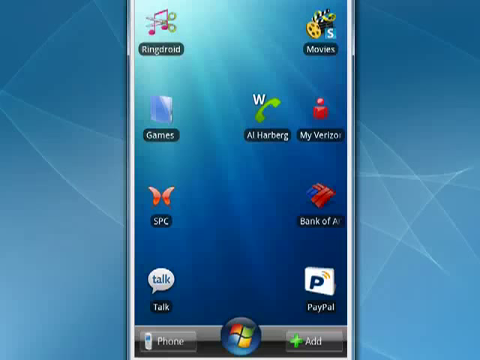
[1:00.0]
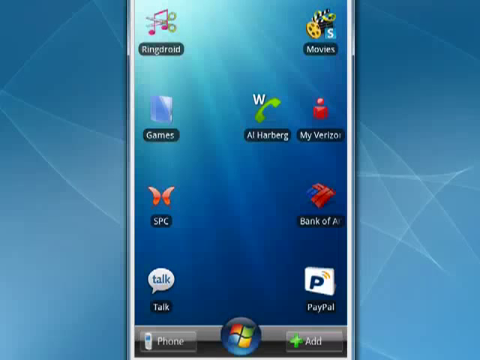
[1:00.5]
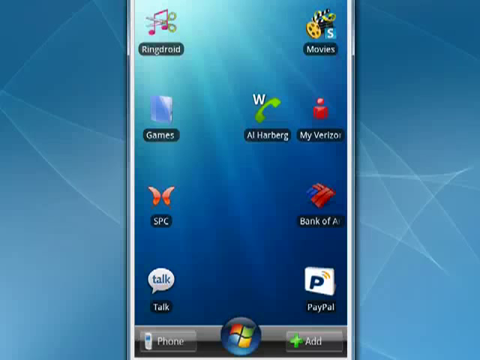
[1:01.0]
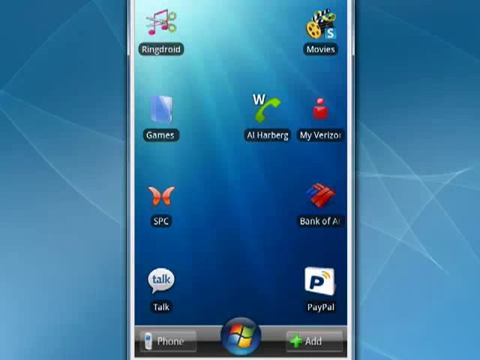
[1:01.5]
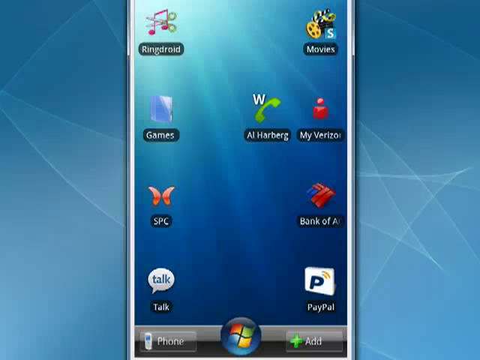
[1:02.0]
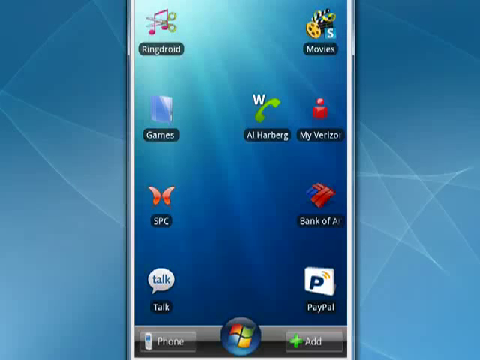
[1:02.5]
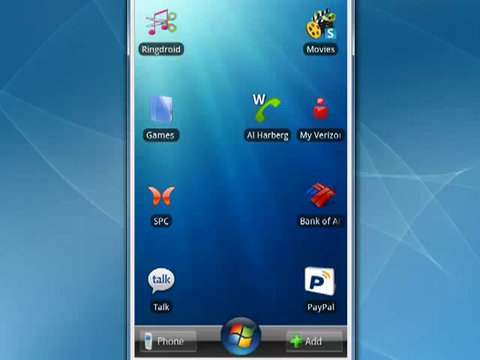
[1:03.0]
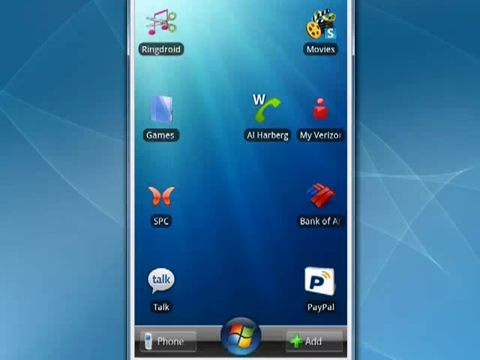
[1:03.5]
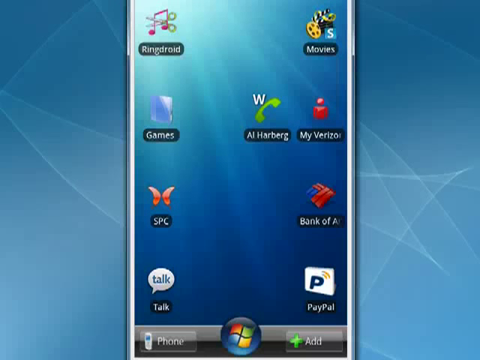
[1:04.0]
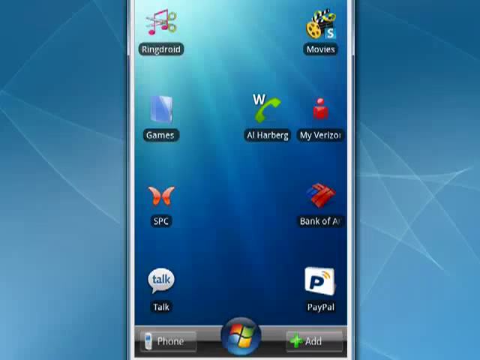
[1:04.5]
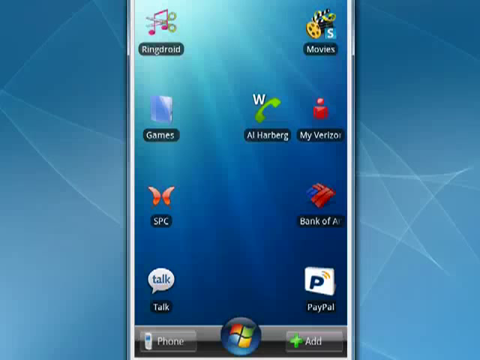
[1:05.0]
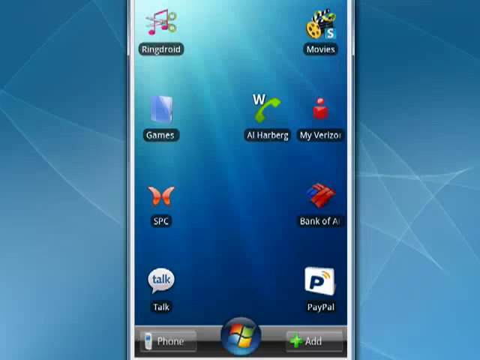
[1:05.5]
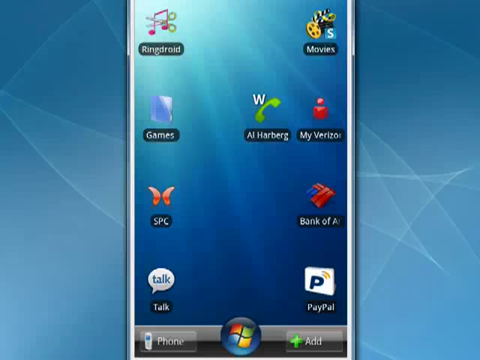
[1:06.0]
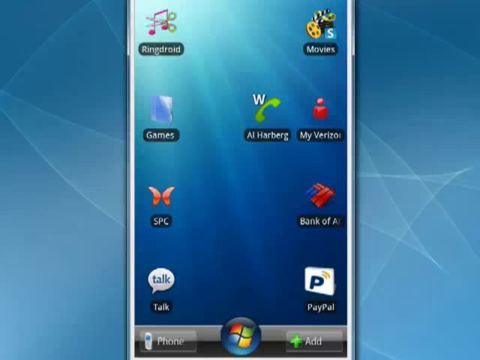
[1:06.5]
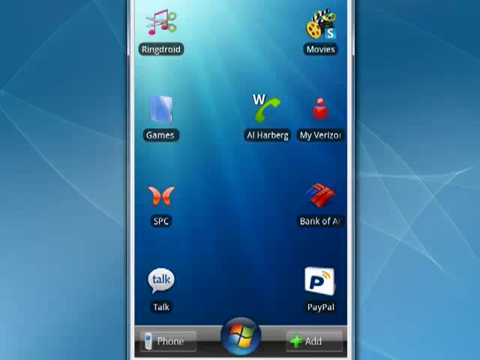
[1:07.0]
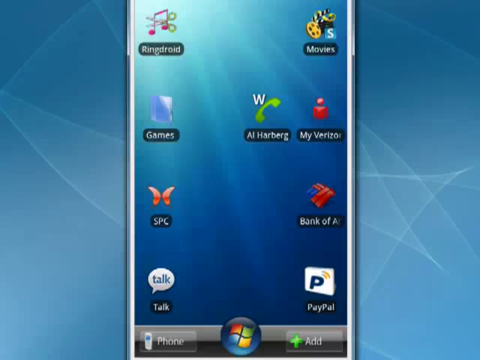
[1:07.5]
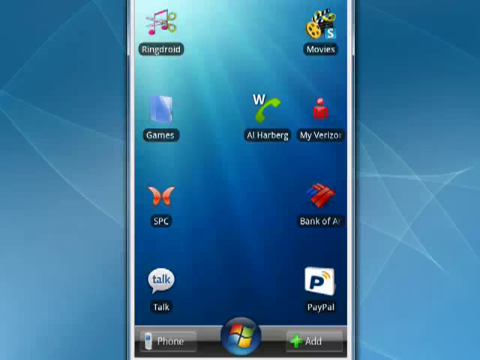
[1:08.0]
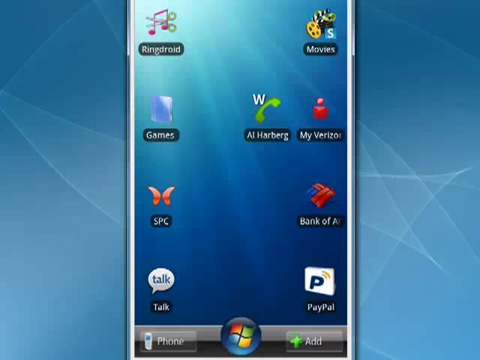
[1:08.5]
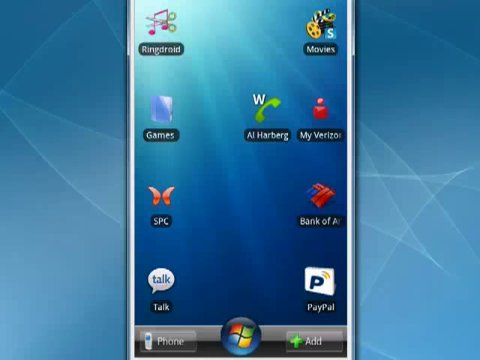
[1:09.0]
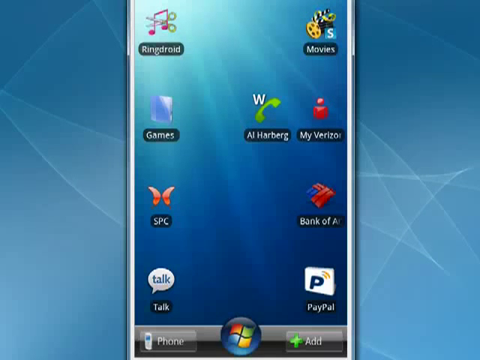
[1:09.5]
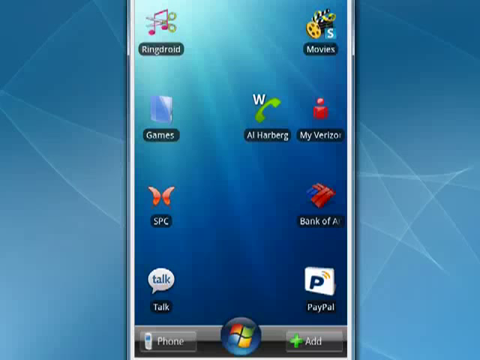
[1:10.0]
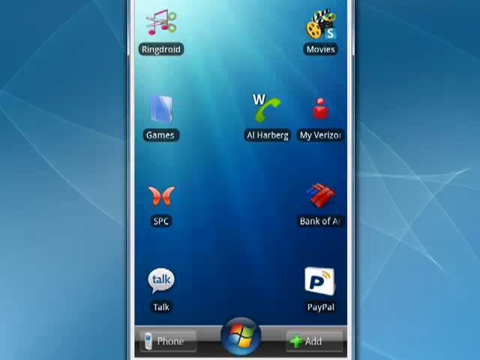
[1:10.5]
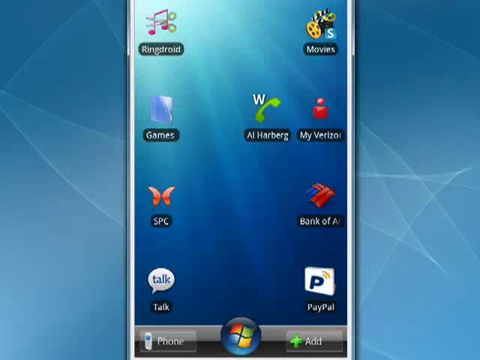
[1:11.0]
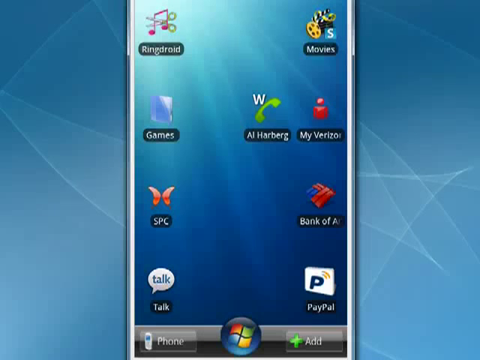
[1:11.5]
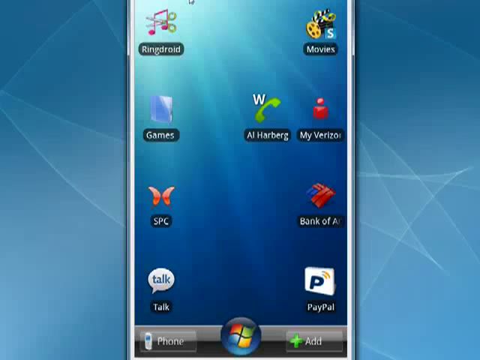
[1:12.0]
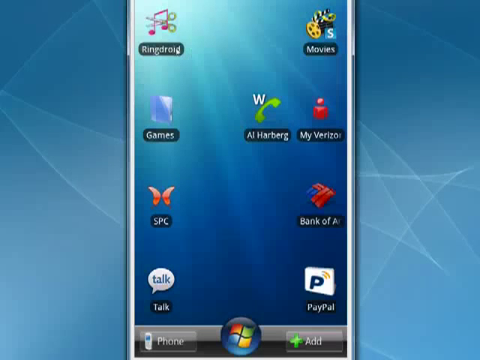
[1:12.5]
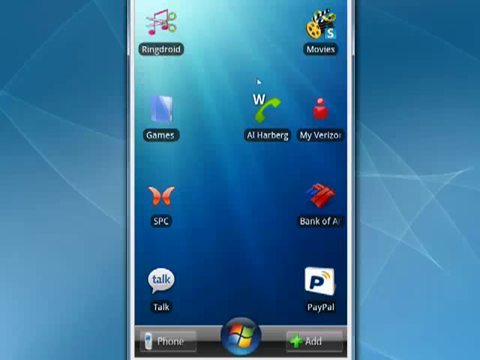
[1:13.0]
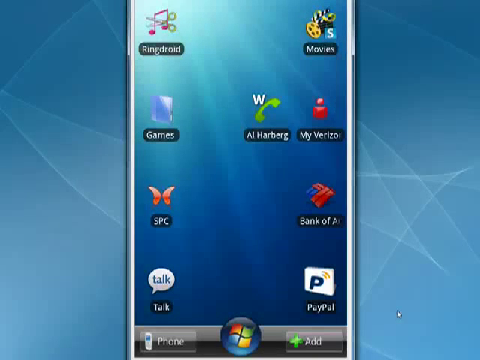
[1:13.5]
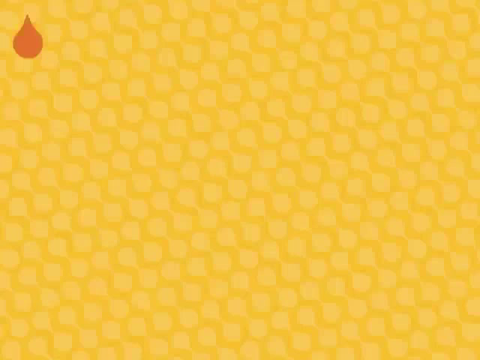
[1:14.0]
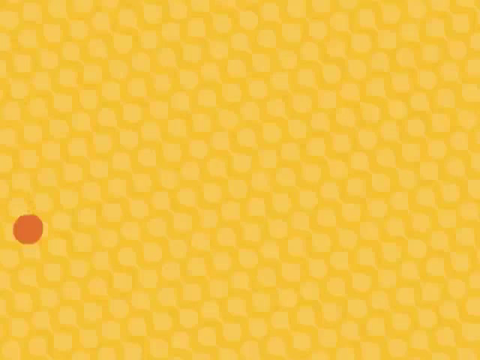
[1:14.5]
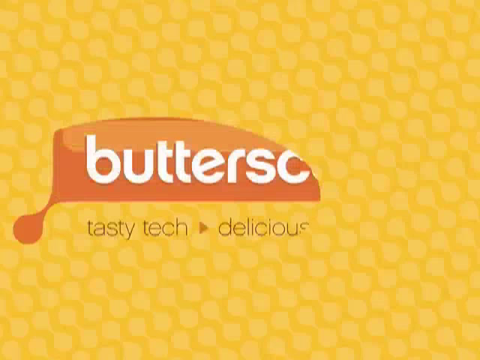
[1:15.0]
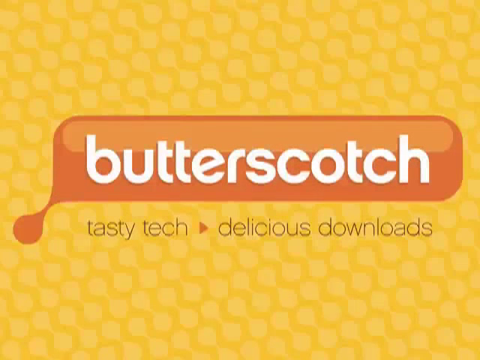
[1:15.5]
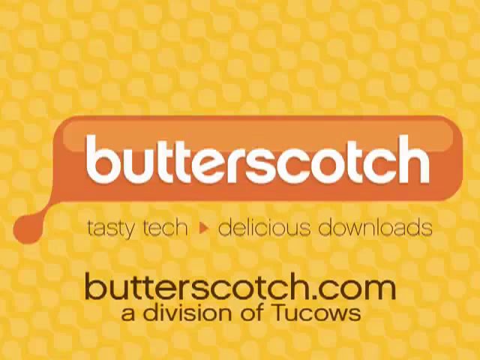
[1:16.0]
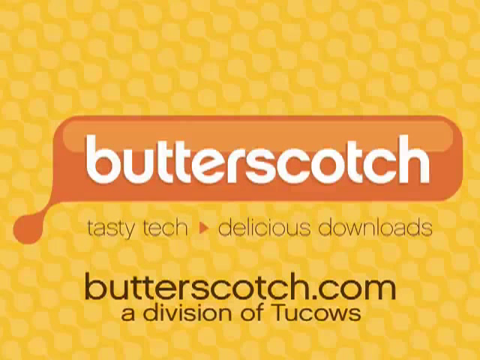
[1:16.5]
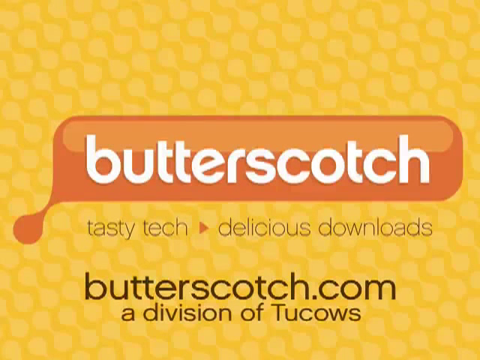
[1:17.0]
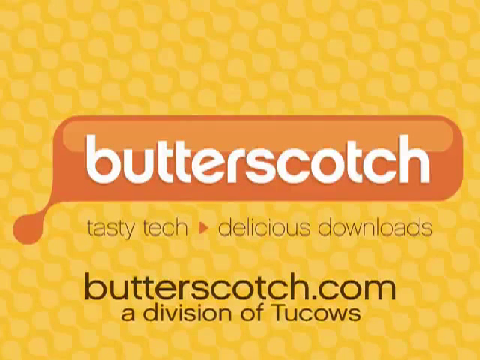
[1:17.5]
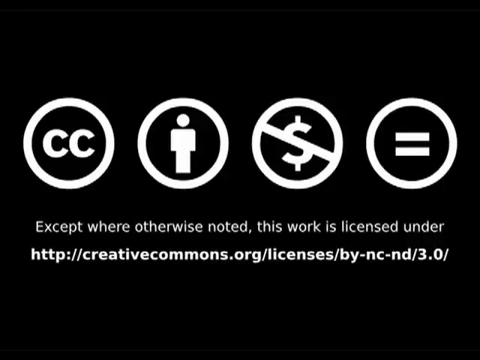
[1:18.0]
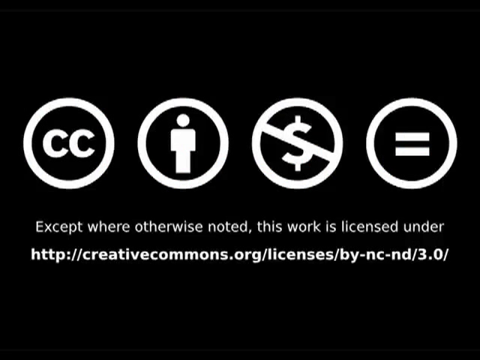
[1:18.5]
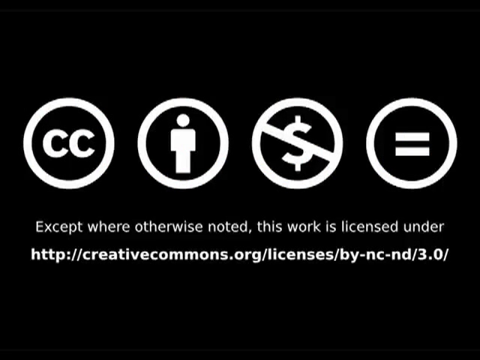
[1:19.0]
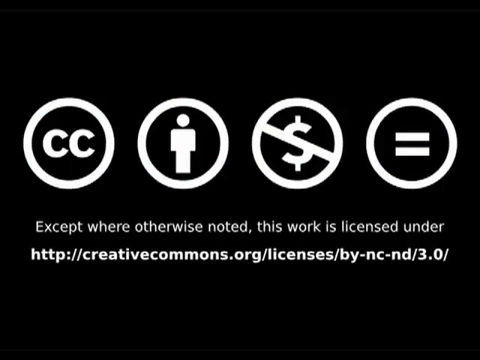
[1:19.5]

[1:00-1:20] An Android phone is in the center of a blue background. On the left side its thumbnails read "Ringdroid," "Games," "SPC" and "Talk"; on the right side, from top to bottom, they read "Movies," "My Verizon," "Bank of America" and "PayPal." Next to My Verizon is the green logo that reads "Al Harberg." The Ringdroid logo is a pink musical note with green scissors going through it, Games is a blue tablet, SPC is an orange-red butterfly, and Talk is a white speech bubble with blue text that says "talk." The Movies logo is a yellow reel next to a black-and-white cut sign with a blue square in front of it bearing the white text "Is." The My Verizon logo is a red human torso with a head, the Al Harberg logo is a green phone icon with a white W, the Bank of America logo is a red and blue flag-like shape, and the PayPal logo is a white square with a blue P with a yellow signal coming from it. The mouse hovers over Ringdroid and exits at the bottom right. The scene transitions to a yellow background covered with lighter yellow dot-like patterns. At the center is an orange shape with white text inside that reads "butterscotch." Under it is text saying "tasty tech," an orange play button, and then "delicious downloads." At the bottom of the screen it reads "butterscotch.com," and under that "a division of Tucows." The scene then transitions to a black background with the cc logo in a white circle, next to a person logo in a white circle, next to a no-dollar-sign logo in a white circle, next to an equal sign in a white circle. Underneath is text that says "Except where otherwise noted, this work is licensed under" followed by "http://creativecommons.org/licenses/by-nc-nd-3.0/".